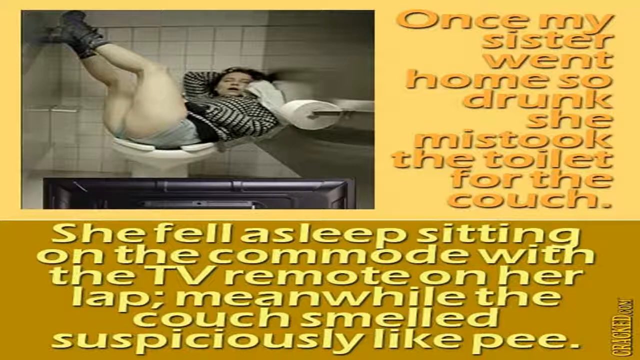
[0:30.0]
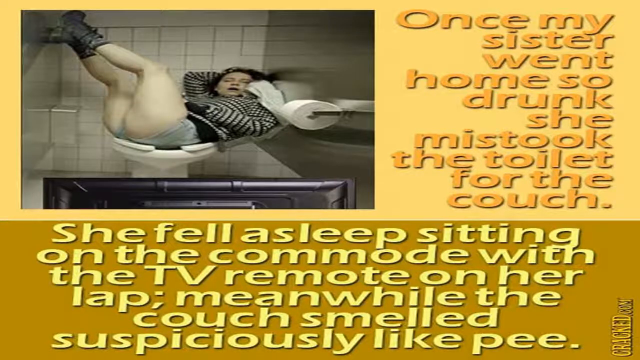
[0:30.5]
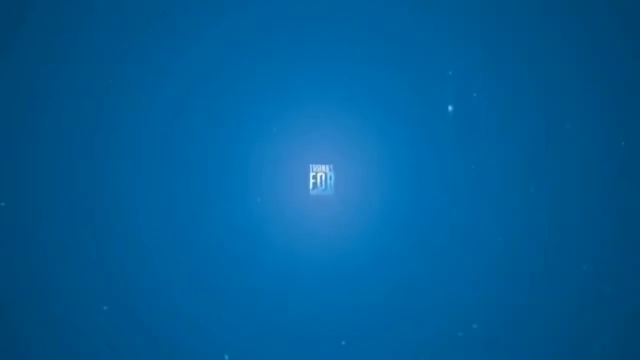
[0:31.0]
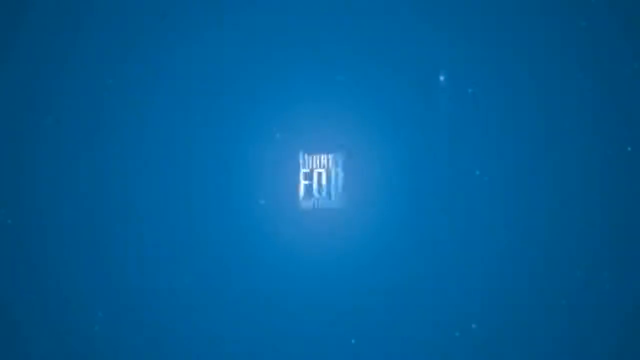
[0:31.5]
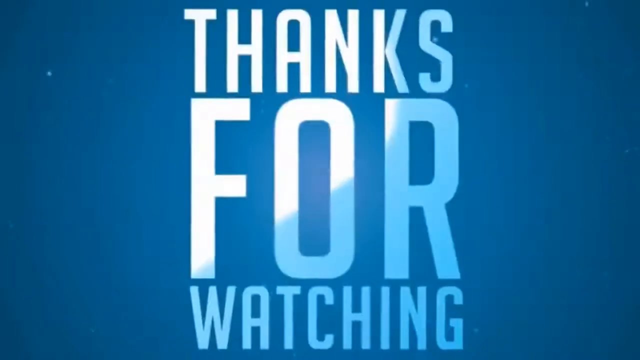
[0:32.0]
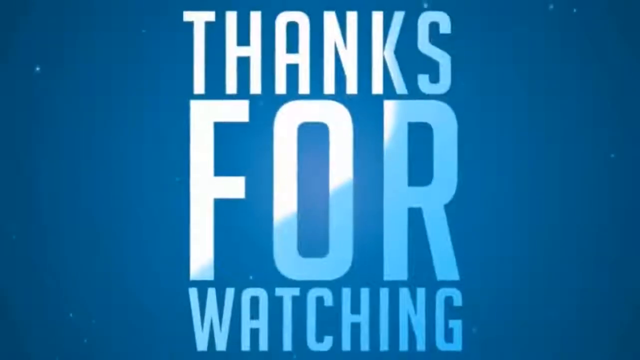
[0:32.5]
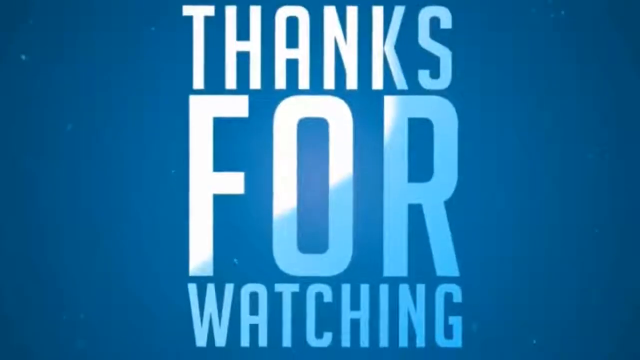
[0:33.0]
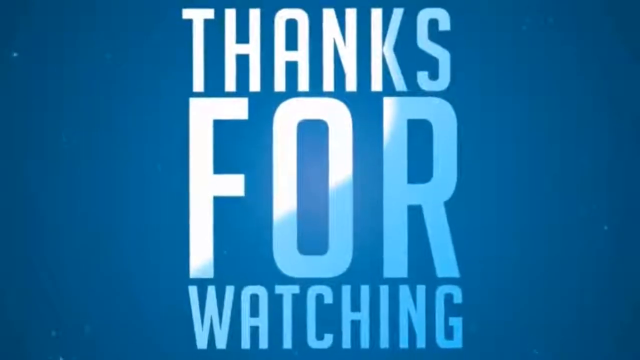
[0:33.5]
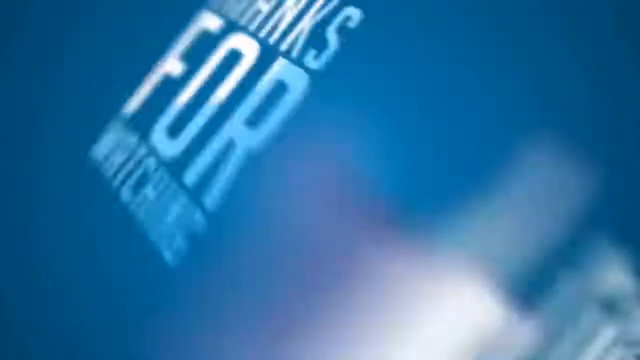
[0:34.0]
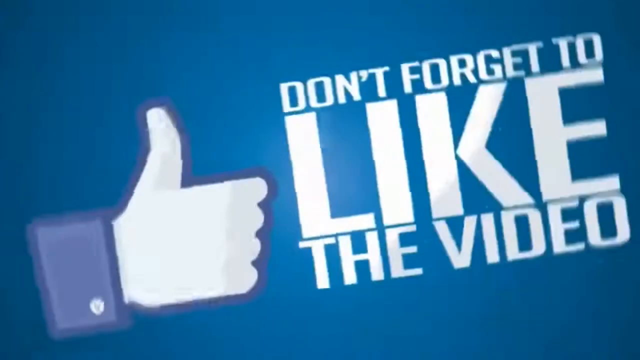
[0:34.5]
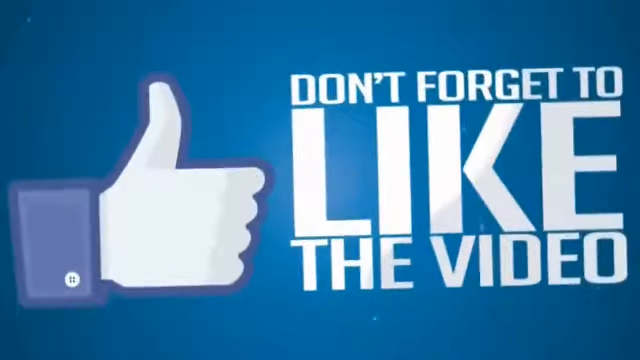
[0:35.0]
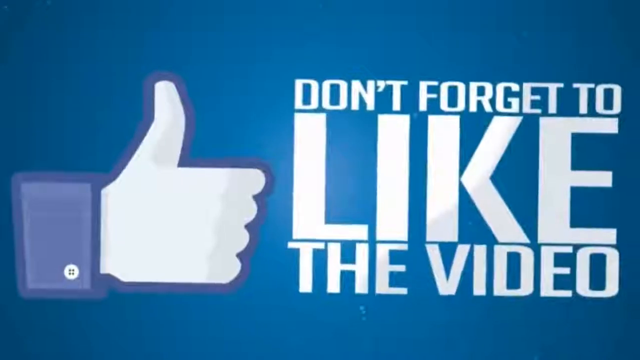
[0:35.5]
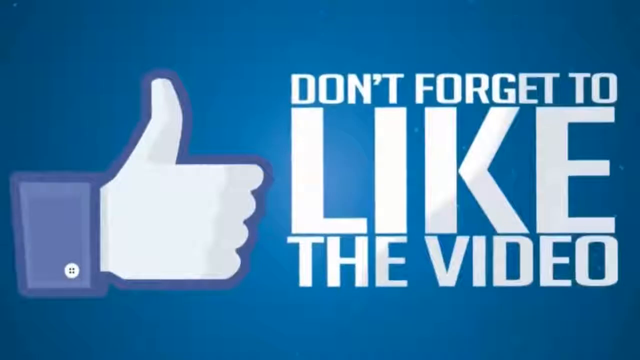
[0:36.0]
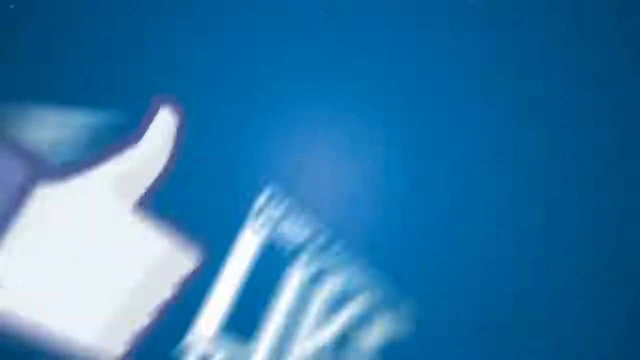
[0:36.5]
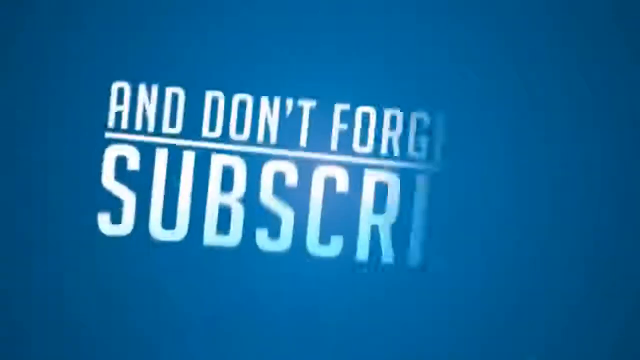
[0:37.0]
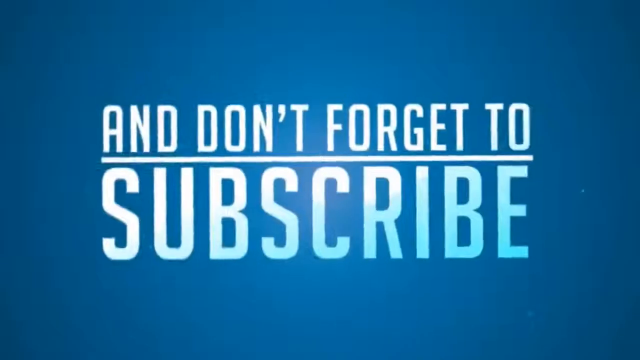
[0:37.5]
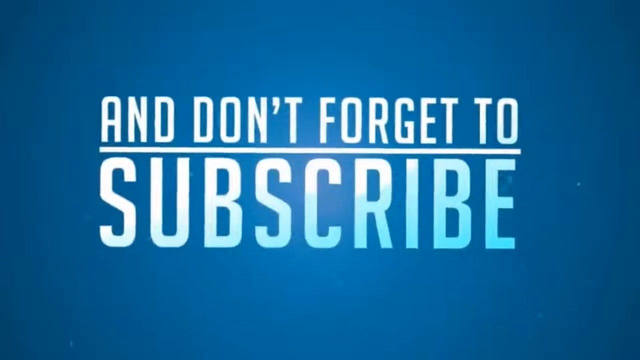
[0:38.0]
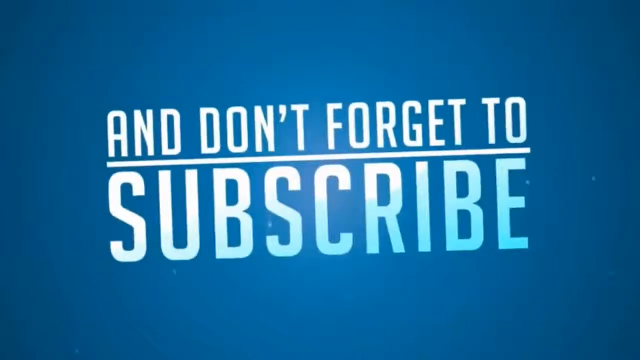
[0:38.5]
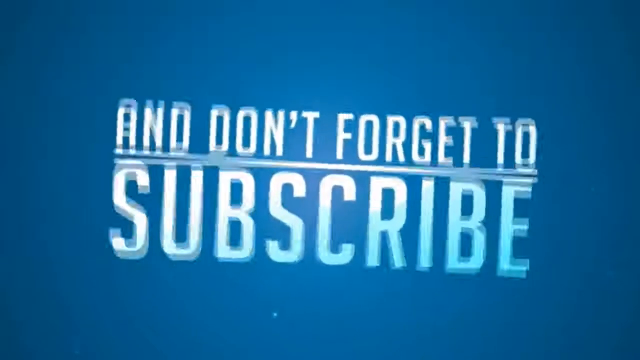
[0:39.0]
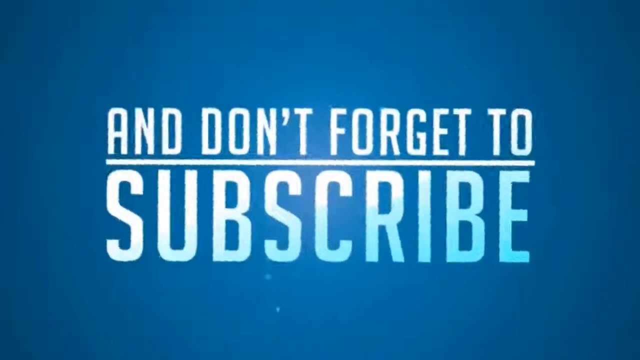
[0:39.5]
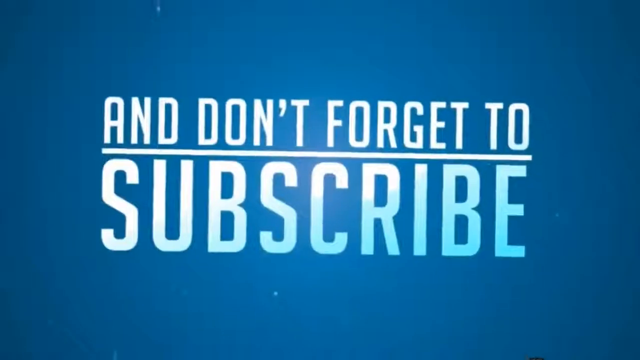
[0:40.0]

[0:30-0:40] The same woman is laying on the toilet like a couch, with a roll of toilet paper beside her and the top of the backside of a TV in front of her. The camera then pans out to a blue screen with the words "Thanks for watching" in white. A like logo appears on the left side, and on the right the text says "don't forget to like the video and don't forget to subscribe." The video is in a rectangular shape.